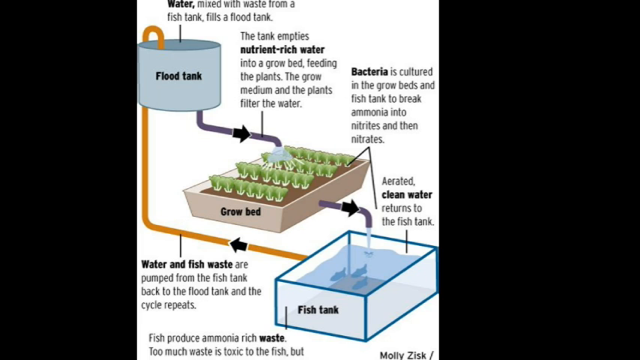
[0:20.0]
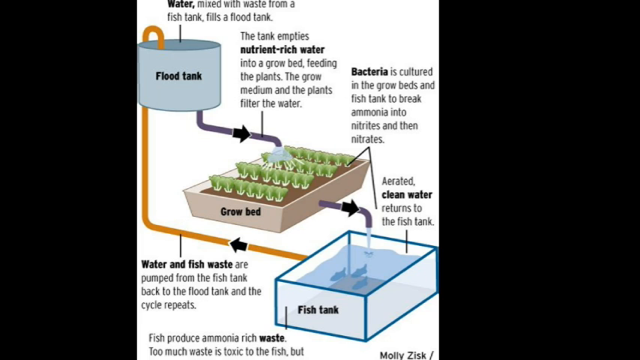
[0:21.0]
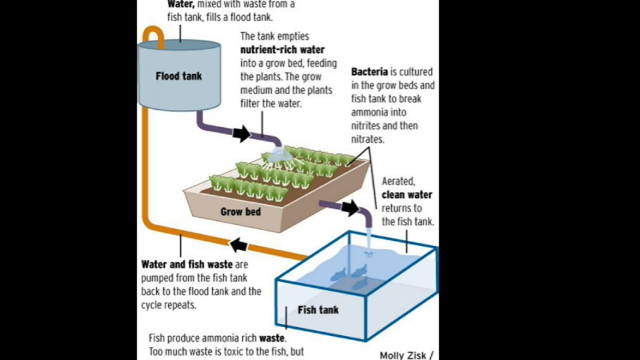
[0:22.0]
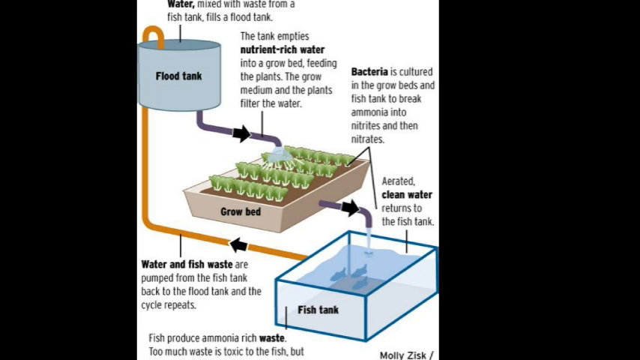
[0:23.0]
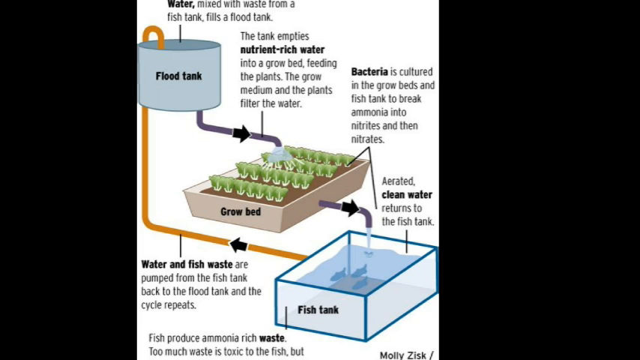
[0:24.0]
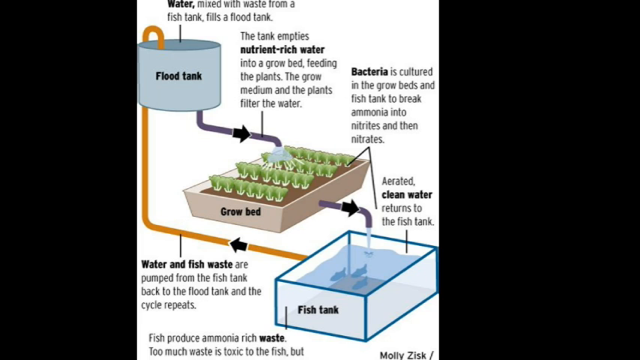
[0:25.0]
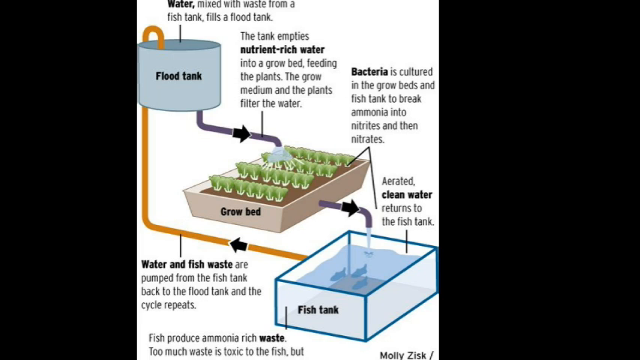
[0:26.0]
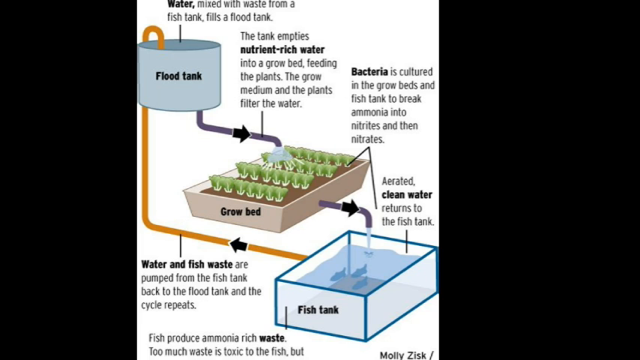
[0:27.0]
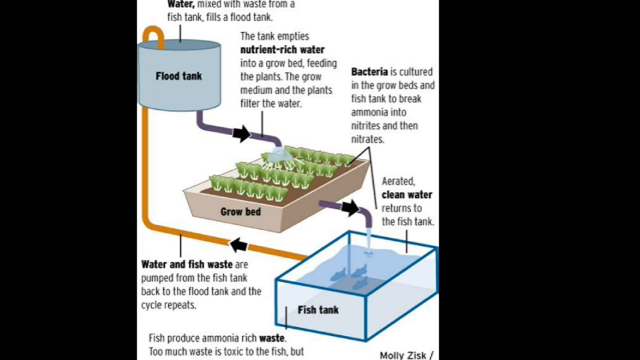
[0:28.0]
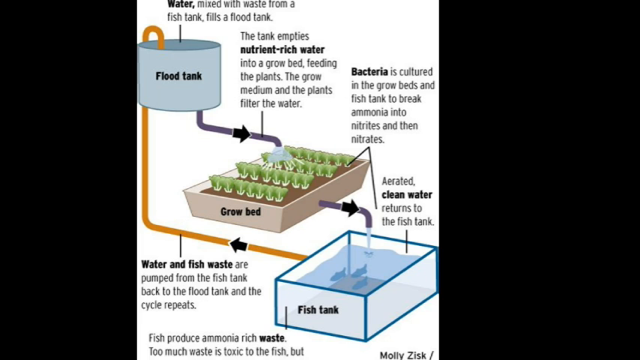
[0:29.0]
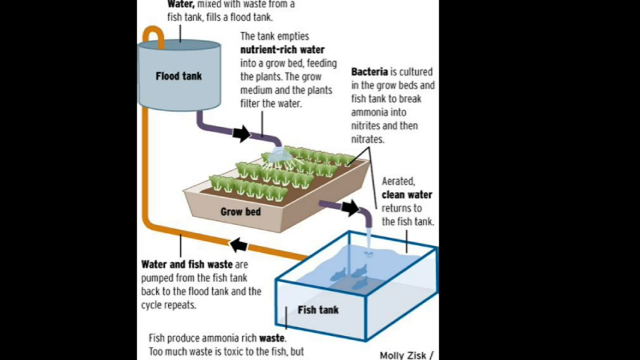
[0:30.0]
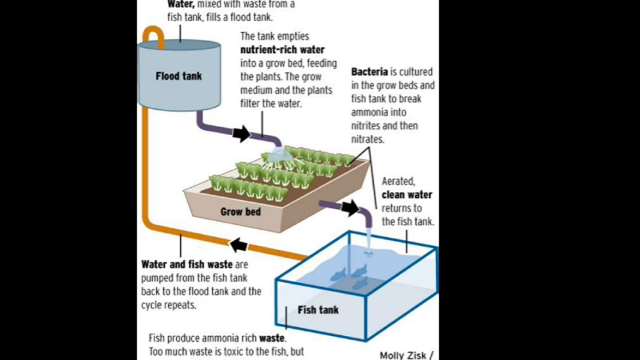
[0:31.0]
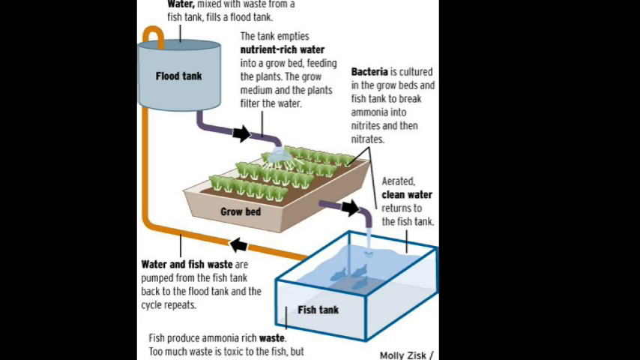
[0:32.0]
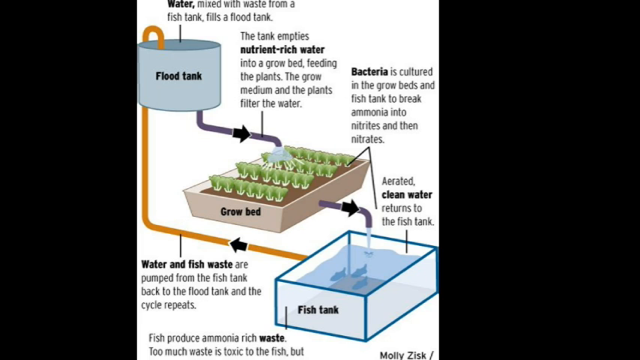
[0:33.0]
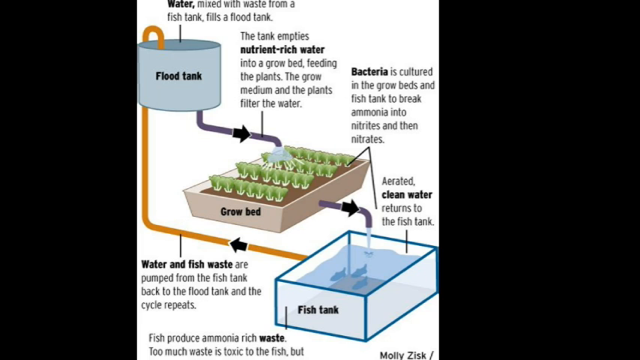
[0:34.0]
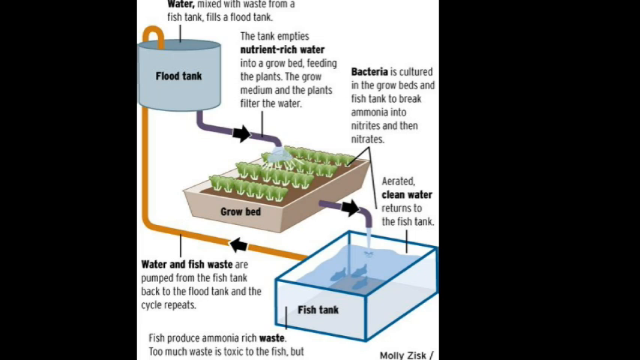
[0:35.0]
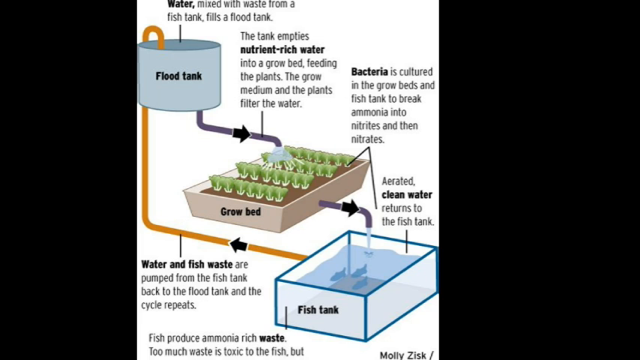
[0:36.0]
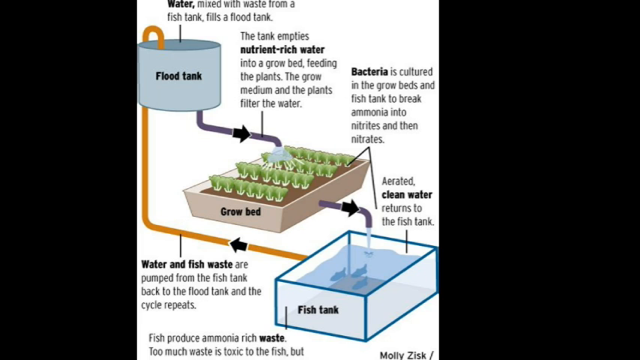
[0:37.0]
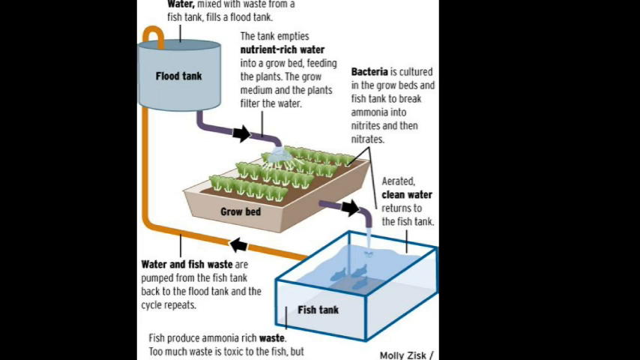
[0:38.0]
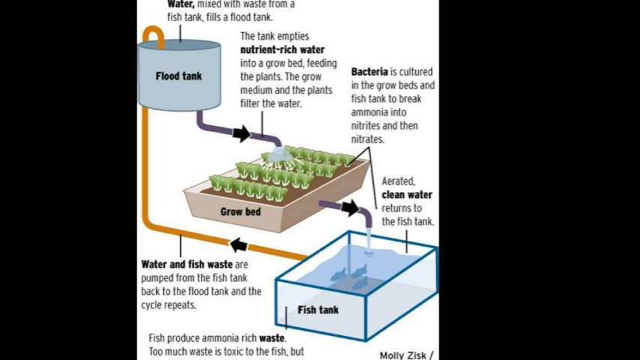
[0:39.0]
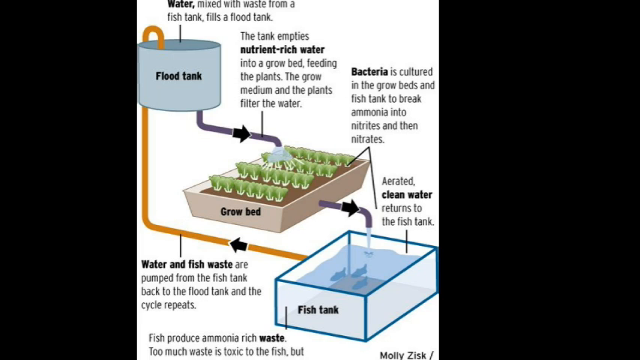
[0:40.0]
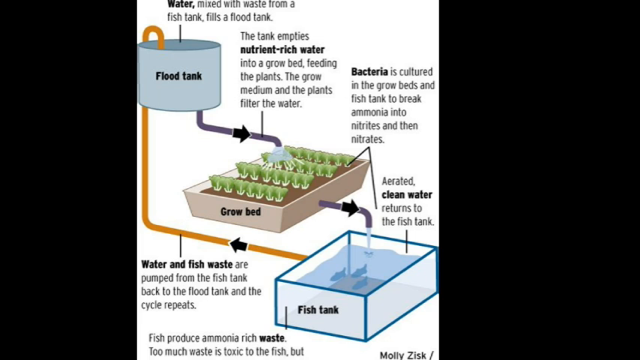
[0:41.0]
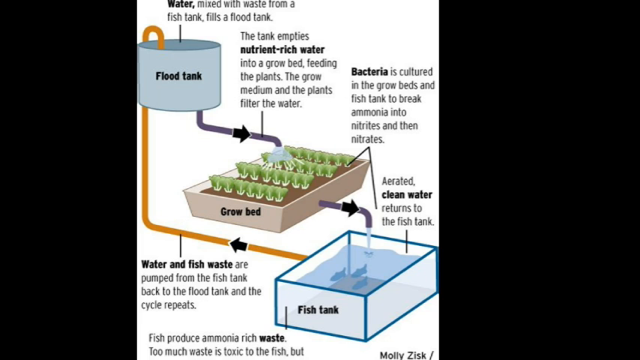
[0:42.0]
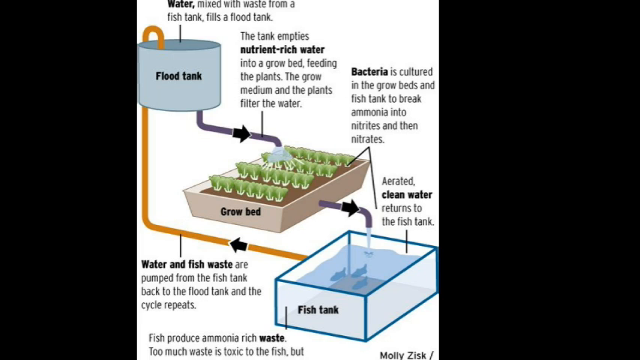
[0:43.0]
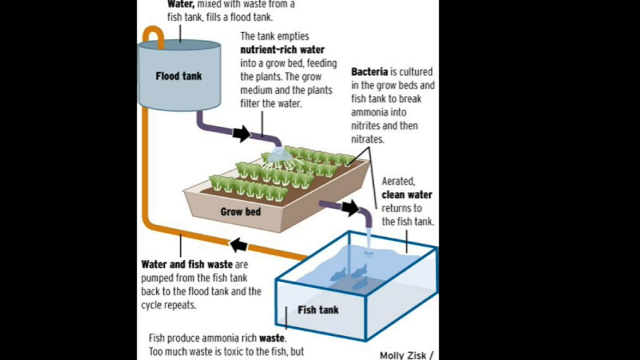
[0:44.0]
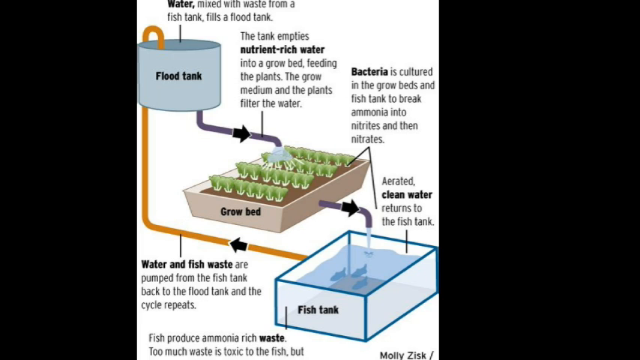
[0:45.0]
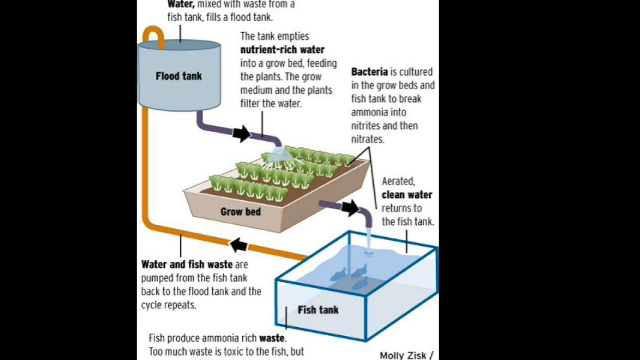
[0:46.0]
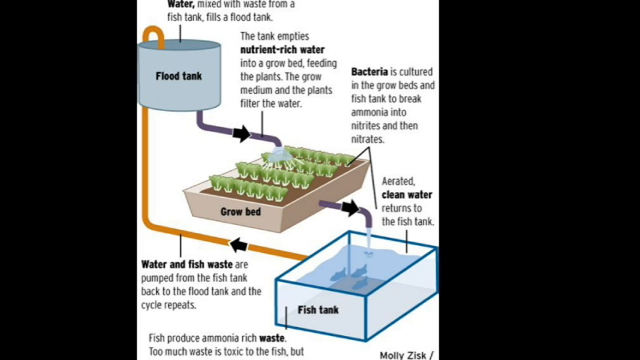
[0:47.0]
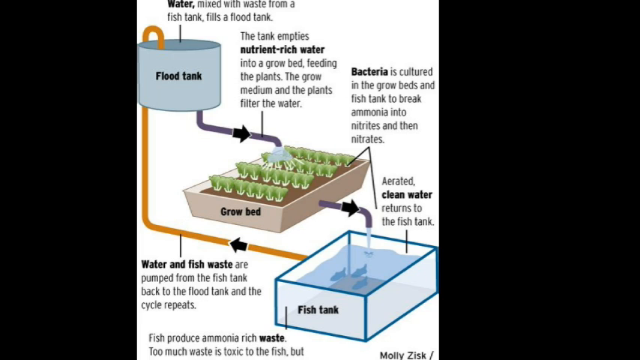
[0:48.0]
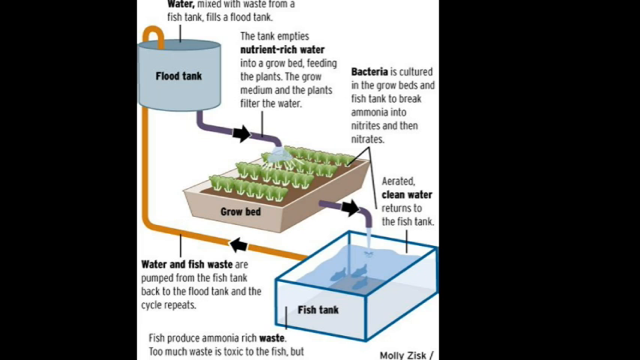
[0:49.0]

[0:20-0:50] The diagram of the aquaponics system continues, starting from the fish tank, where fish produce ammonia-rich waste. Too much waste is toxic to the fish, but it provides nutrient-rich water for the plants. The water goes up into the flood tank and is used to grow plants, which absorb the nutrients and aerate the water, and the clean water is returned to the fish tanks.